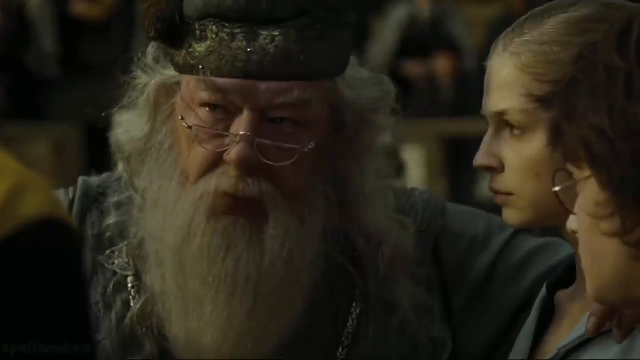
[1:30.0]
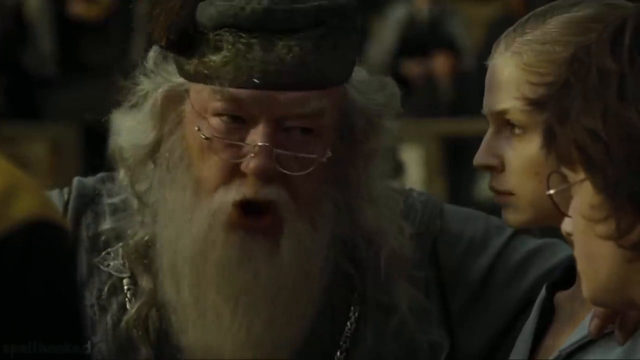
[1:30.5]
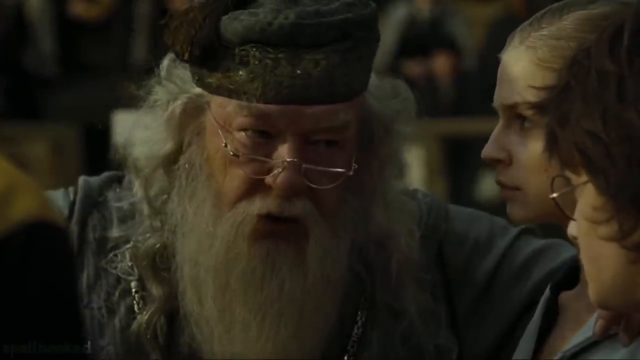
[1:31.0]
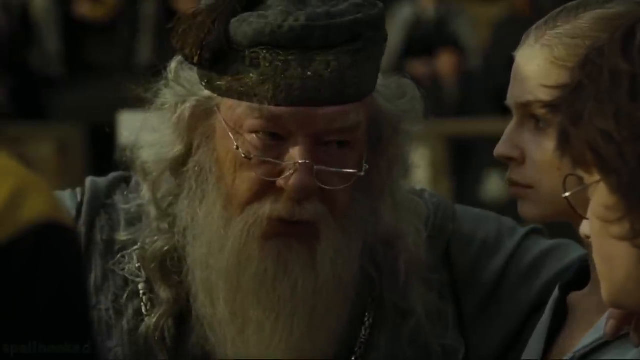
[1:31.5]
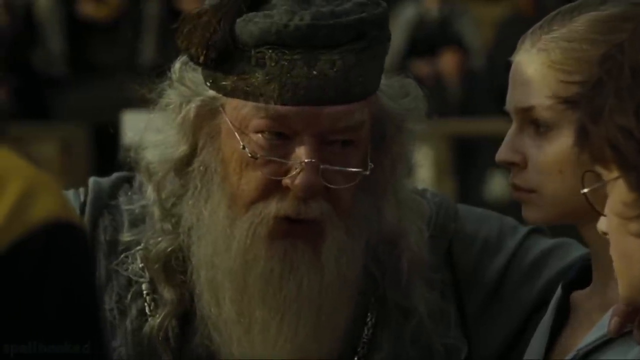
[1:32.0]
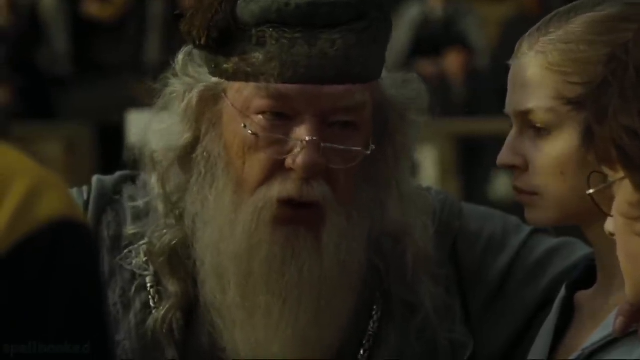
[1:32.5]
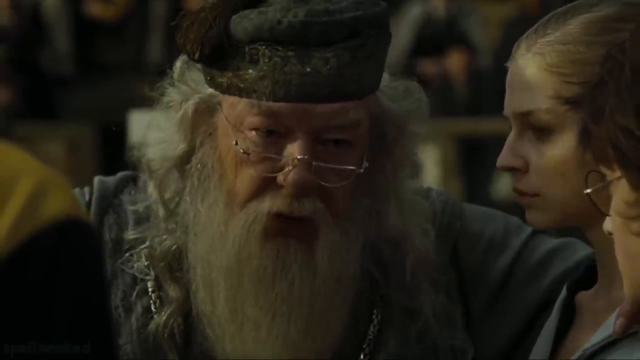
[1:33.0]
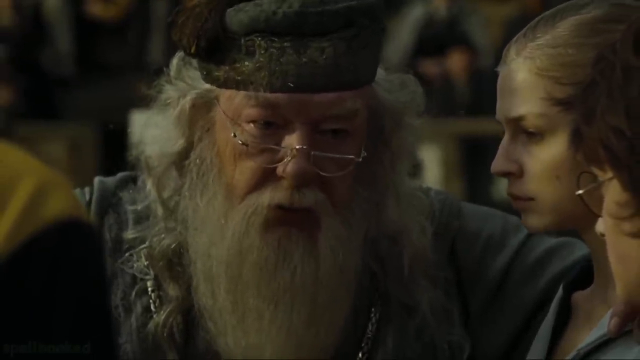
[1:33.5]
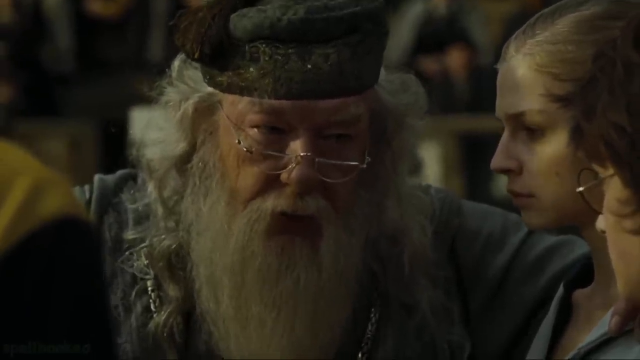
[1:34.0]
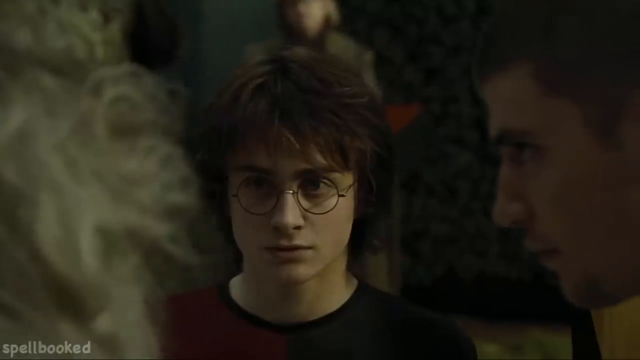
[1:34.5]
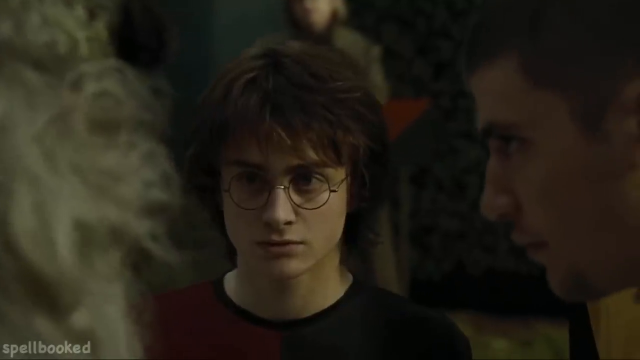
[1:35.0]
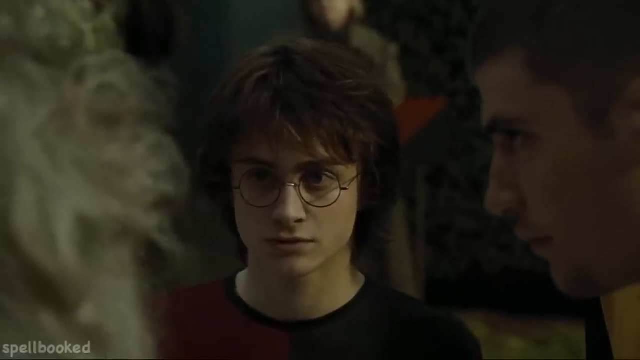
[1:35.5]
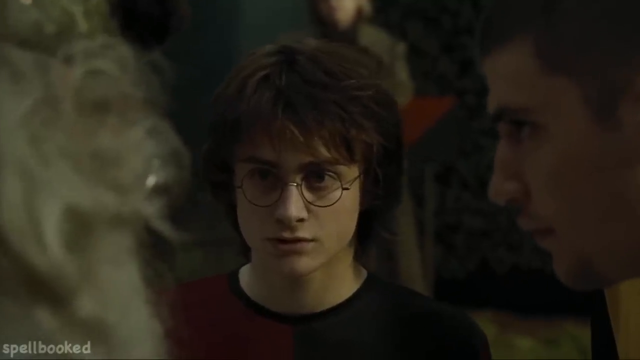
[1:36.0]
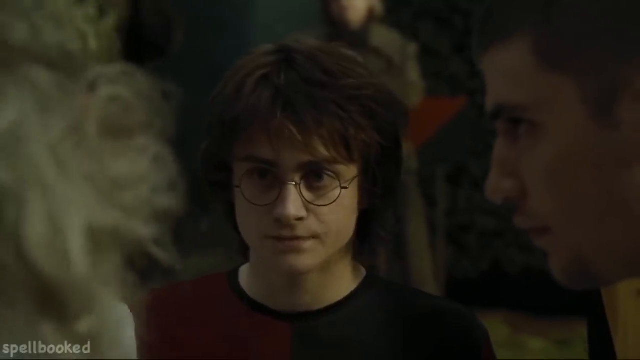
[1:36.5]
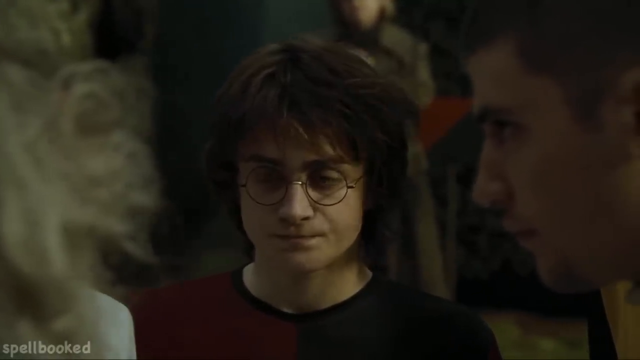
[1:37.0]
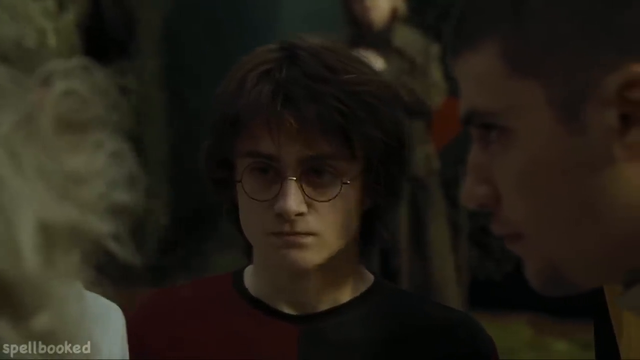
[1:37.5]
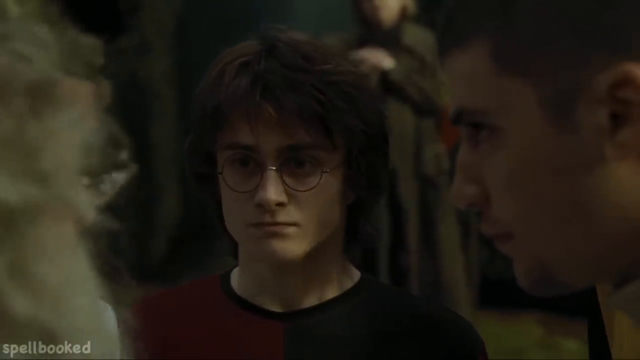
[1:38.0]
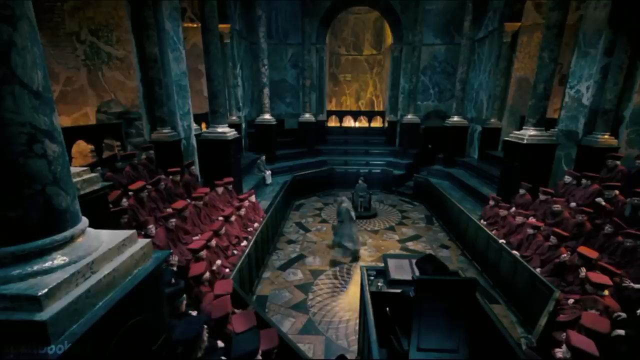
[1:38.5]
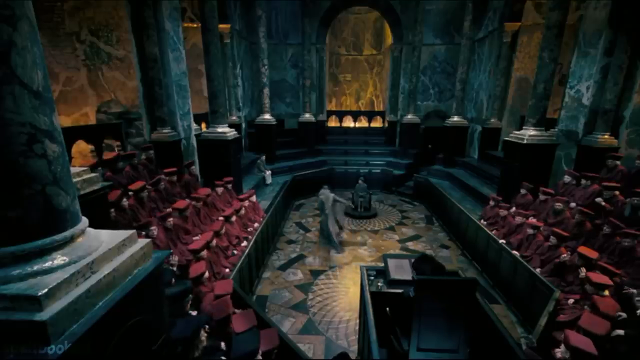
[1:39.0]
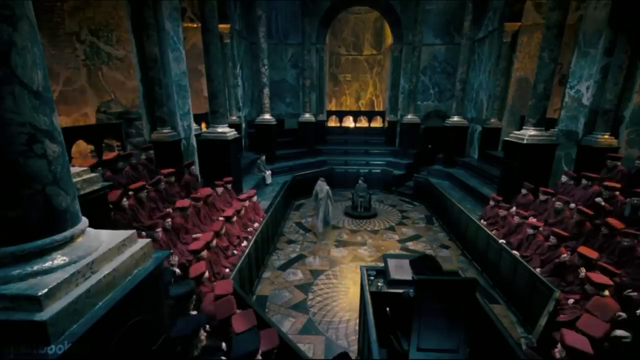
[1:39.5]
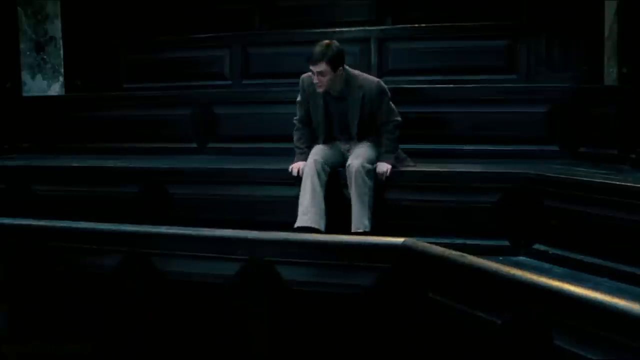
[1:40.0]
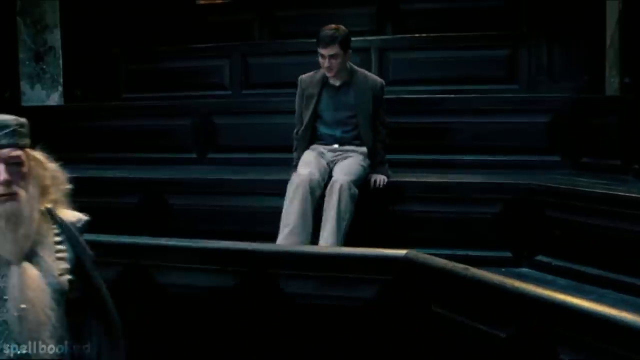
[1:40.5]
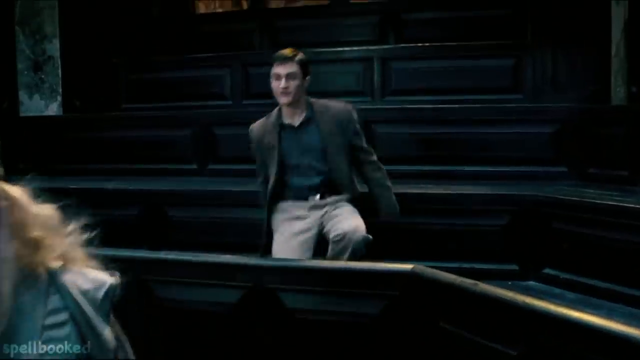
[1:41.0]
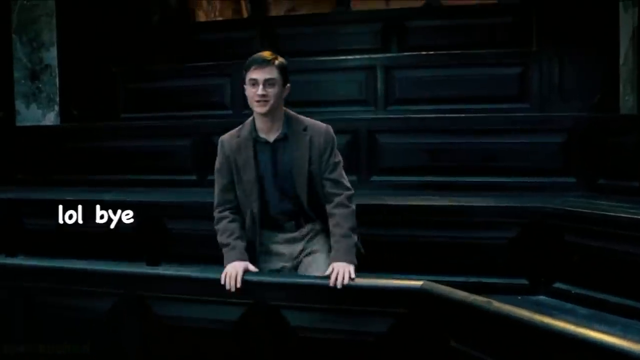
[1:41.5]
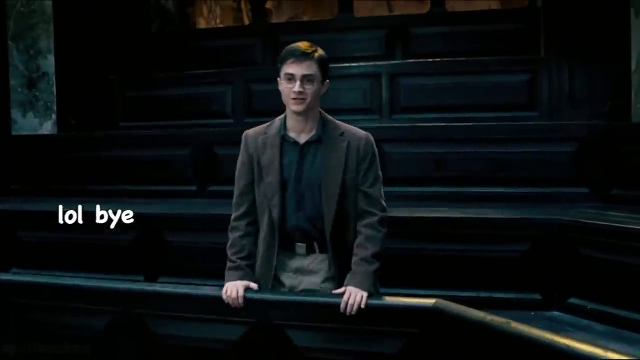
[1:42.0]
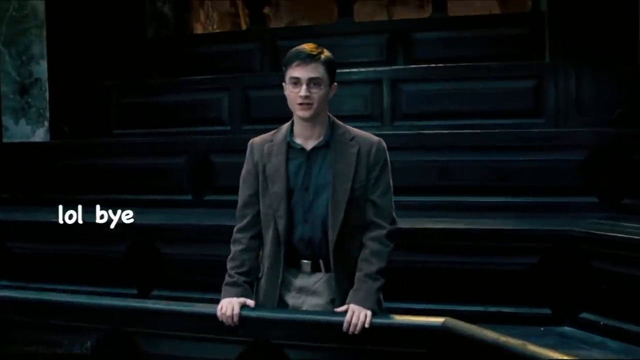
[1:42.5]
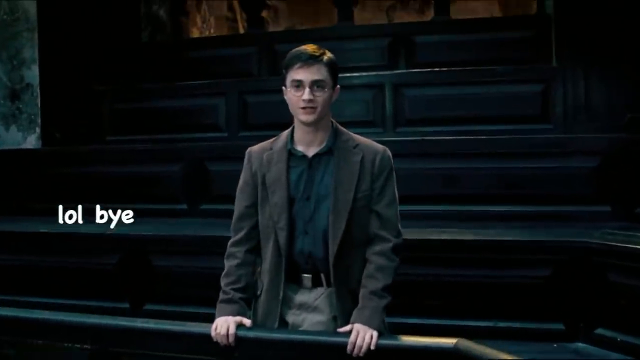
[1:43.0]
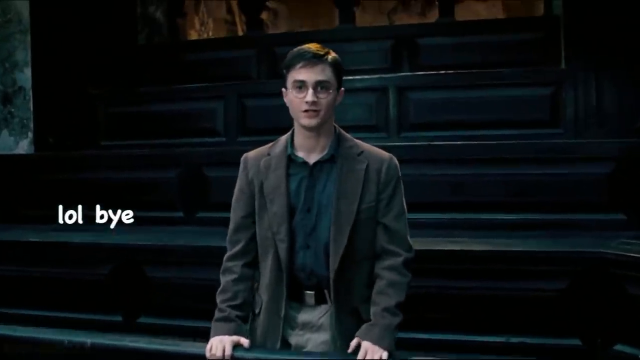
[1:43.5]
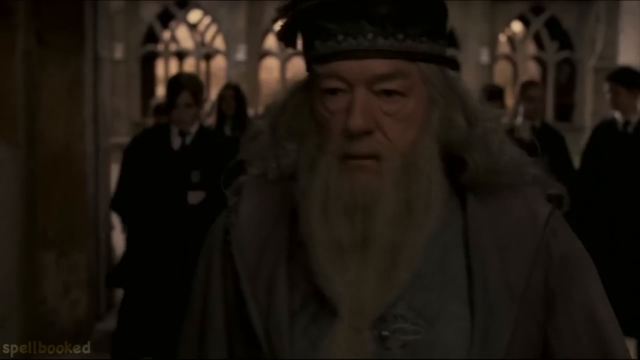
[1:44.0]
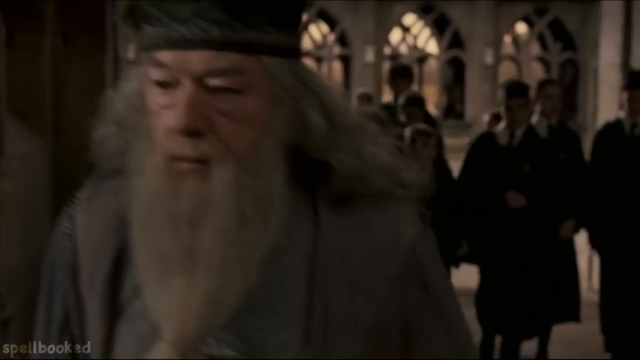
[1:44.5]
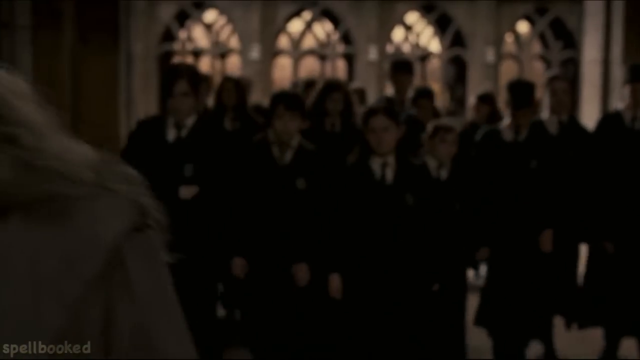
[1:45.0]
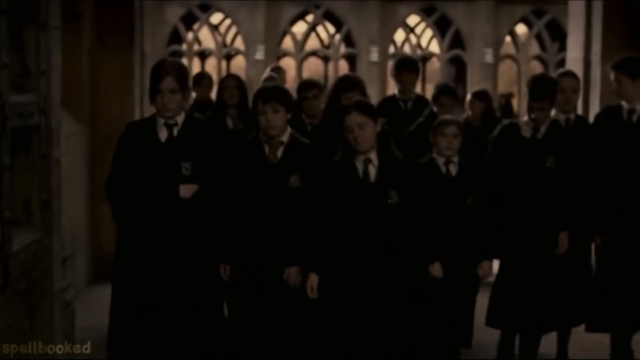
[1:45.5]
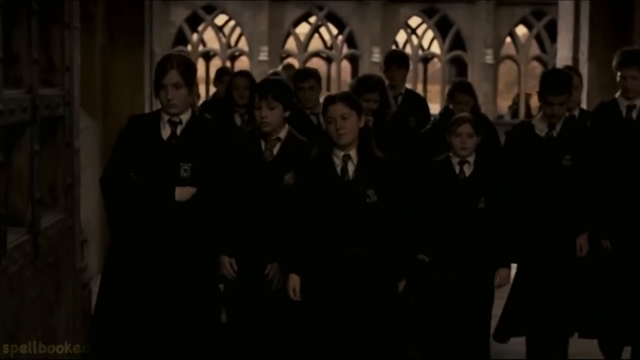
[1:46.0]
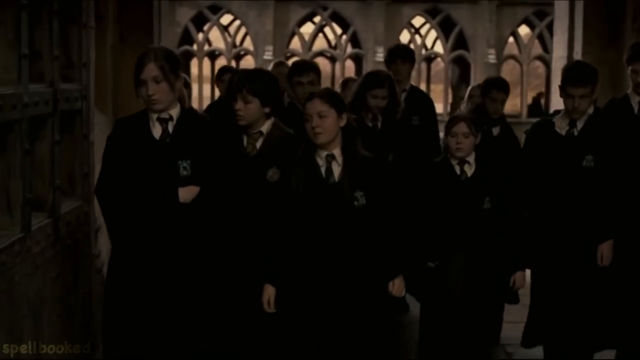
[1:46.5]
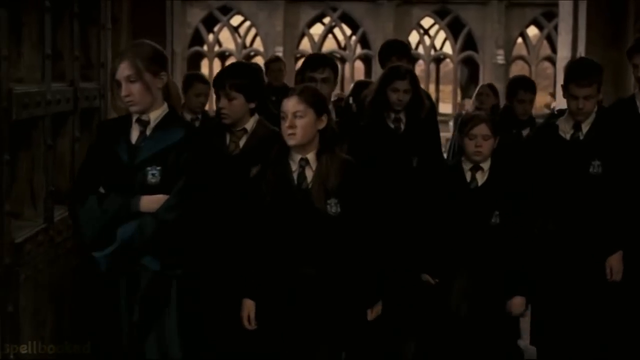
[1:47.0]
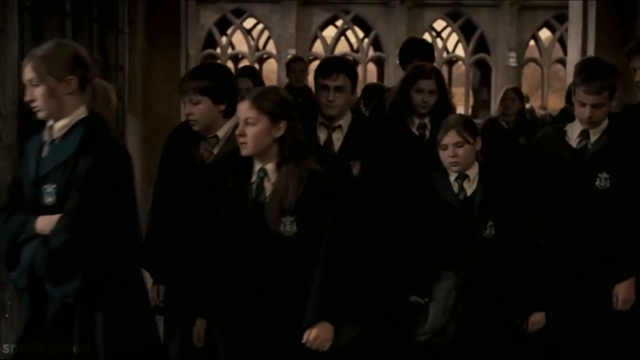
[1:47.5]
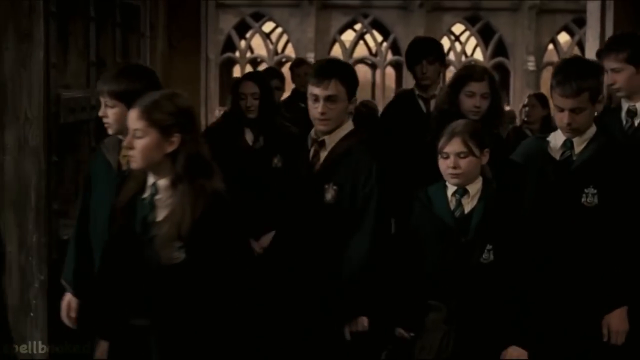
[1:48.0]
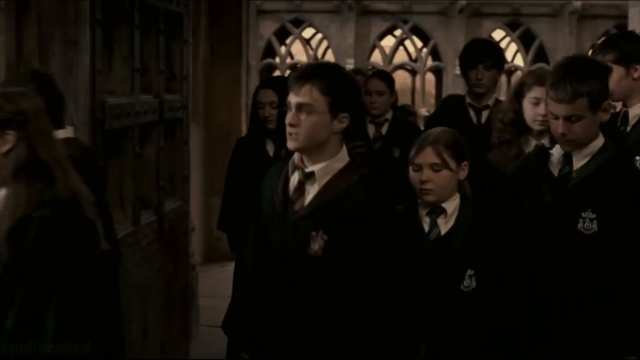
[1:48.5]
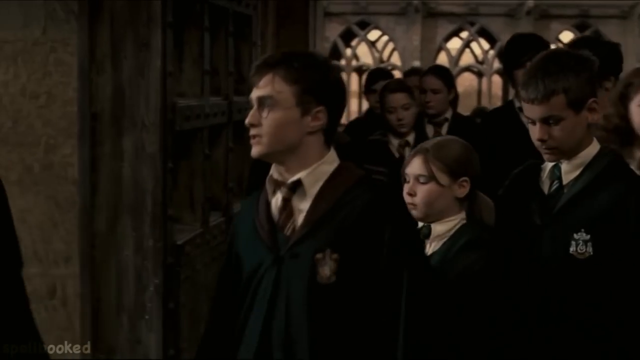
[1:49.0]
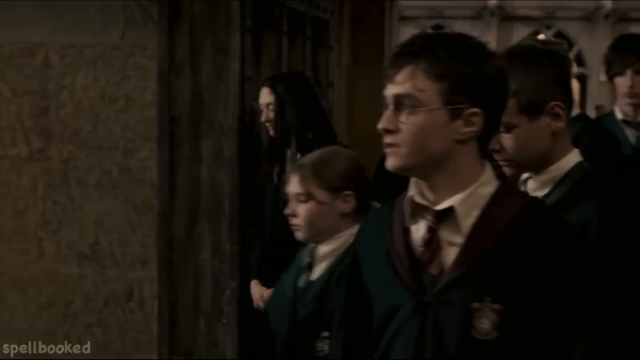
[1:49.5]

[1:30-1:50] Dumbledore talks to a group of students that looks like it includes Harry Potter and Flor, so this is probably from the Goblet of Fire. He looks very serious, and they look serious too. Harry swallows, as if whatever Dumbledore is saying is scary. Then Dumbledore appears to be sitting in what seems like the foreign ministry office, with people up in what look like stadium seats, all wearing what seem to be red gowns with red caps. Dumbledore walks around on the floor as if talking to them. Harry sits in a wooden seat by himself, dressed nicely, and gets up from his seat as if he wants to go talk to Dumbledore. Text comes on the screen: "LOL bye". Back in a hallway, Dumbledore walks hurriedly with a group of students behind him, probably about 50, all in their robes, and Harry kind of navigates through them as if trying to catch up with Dumbledore.